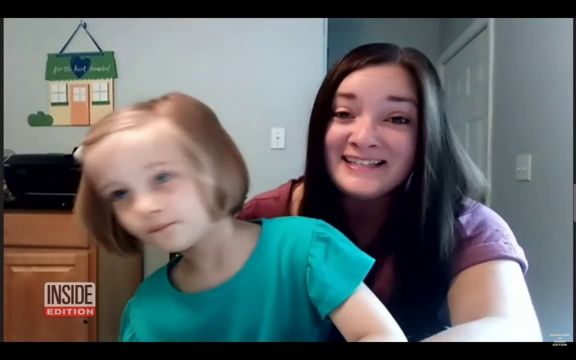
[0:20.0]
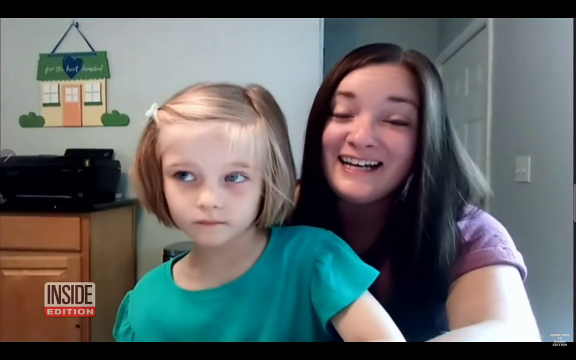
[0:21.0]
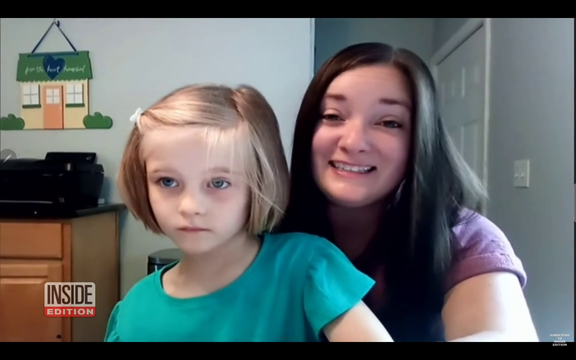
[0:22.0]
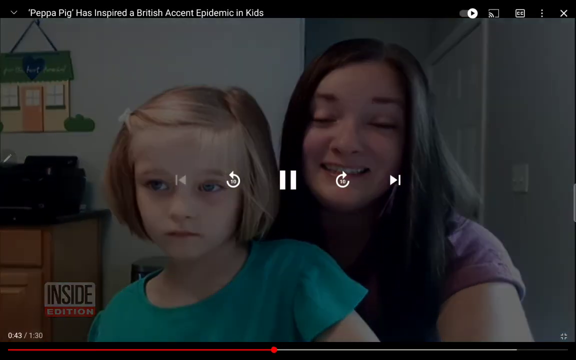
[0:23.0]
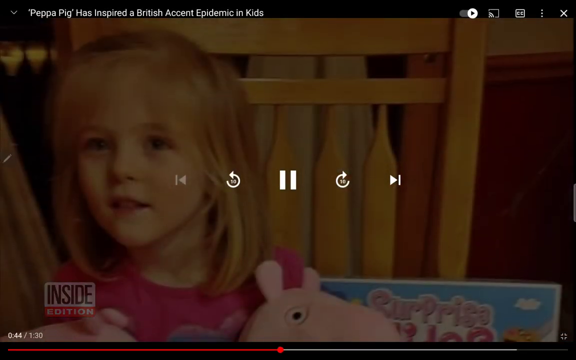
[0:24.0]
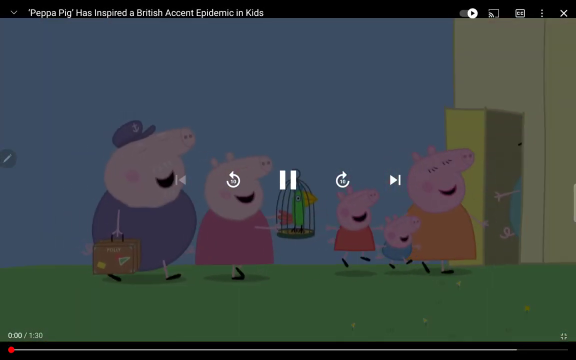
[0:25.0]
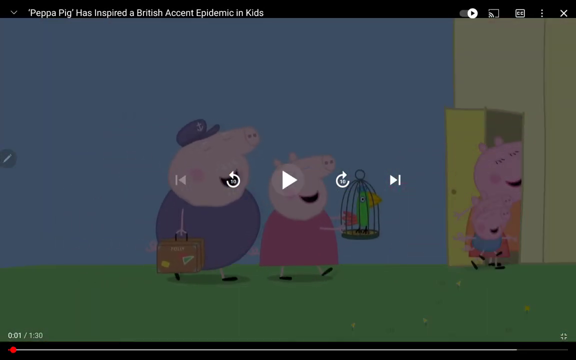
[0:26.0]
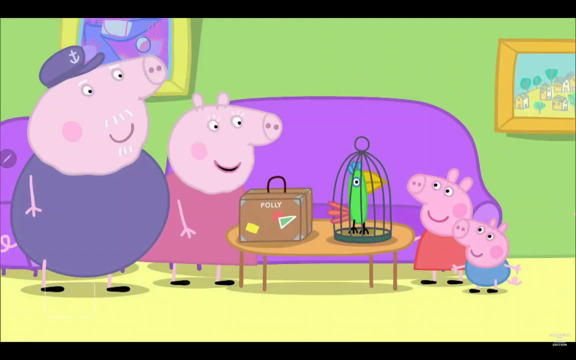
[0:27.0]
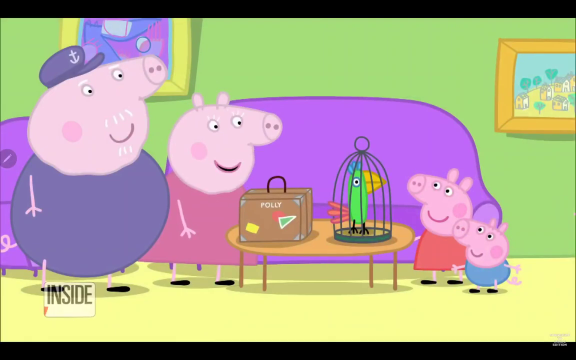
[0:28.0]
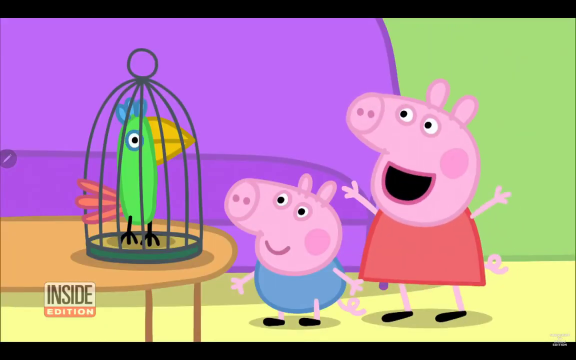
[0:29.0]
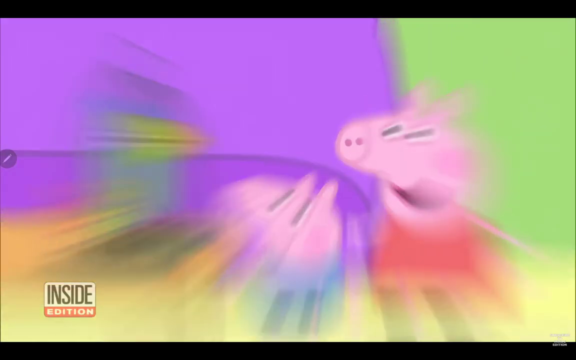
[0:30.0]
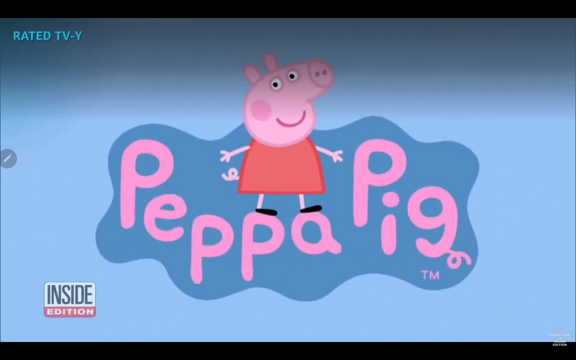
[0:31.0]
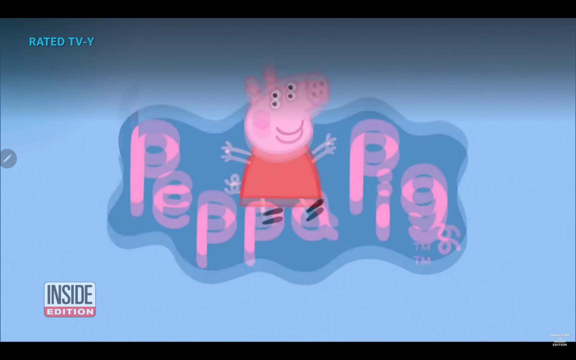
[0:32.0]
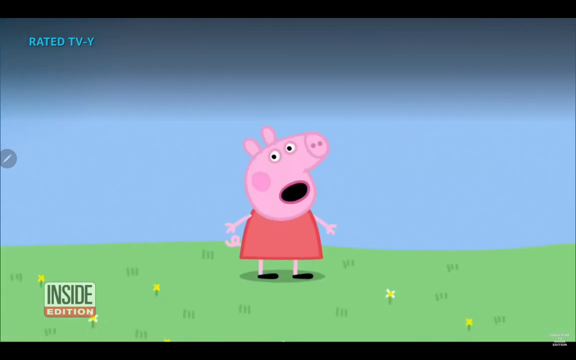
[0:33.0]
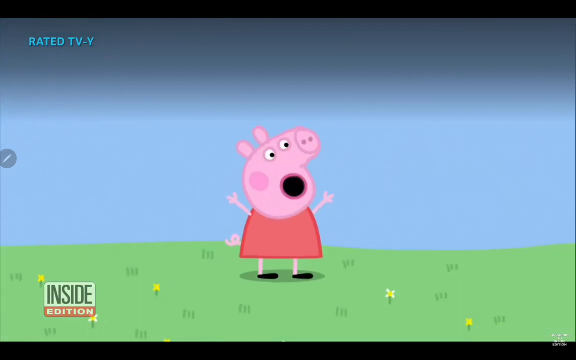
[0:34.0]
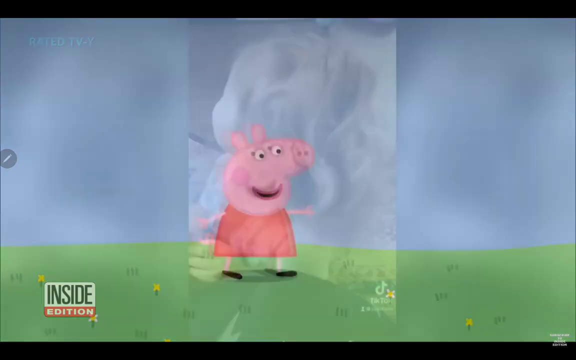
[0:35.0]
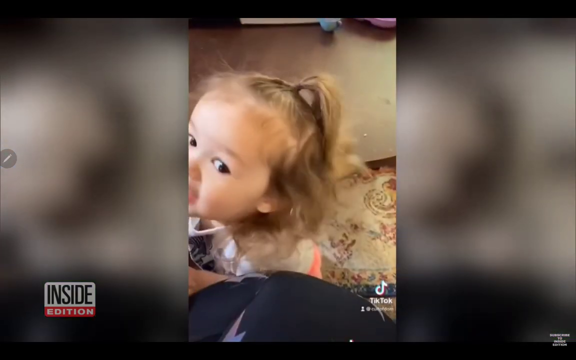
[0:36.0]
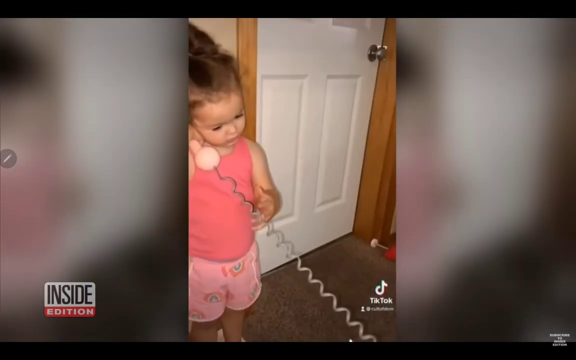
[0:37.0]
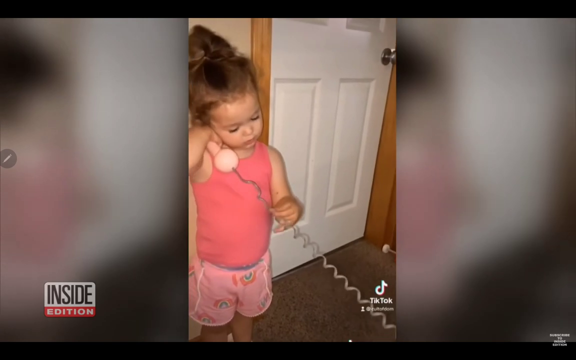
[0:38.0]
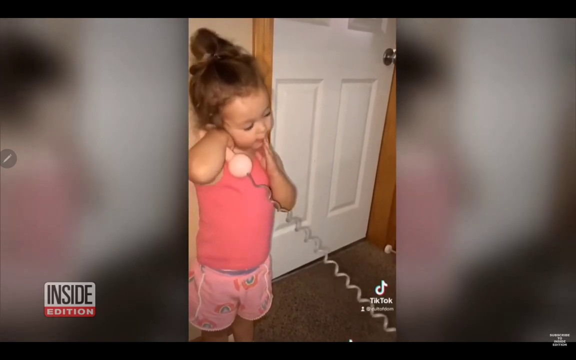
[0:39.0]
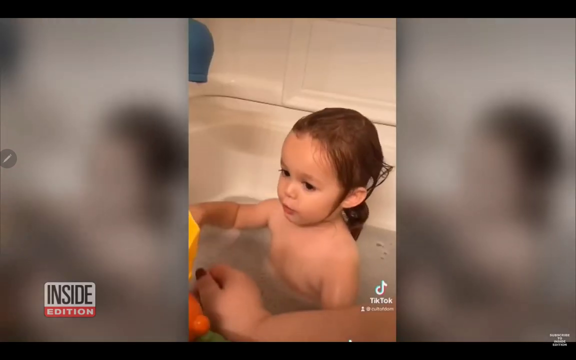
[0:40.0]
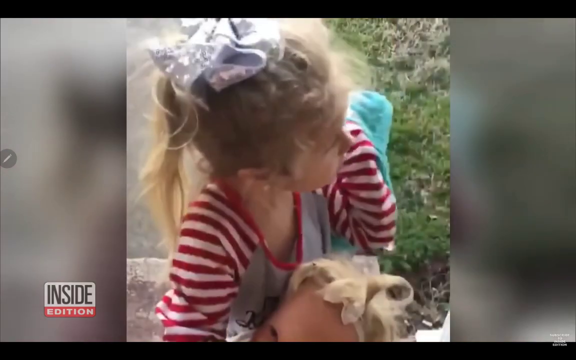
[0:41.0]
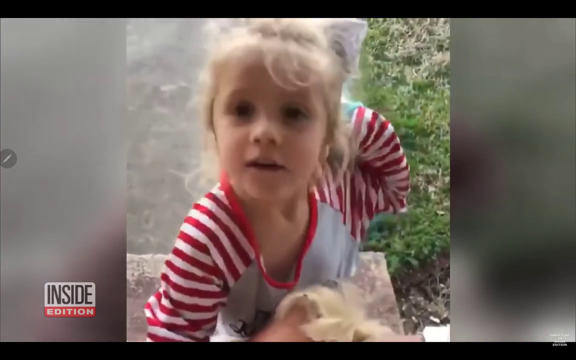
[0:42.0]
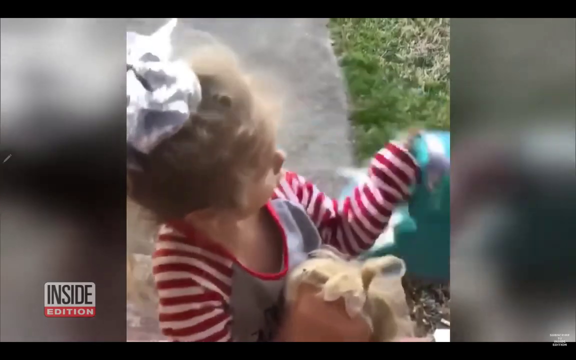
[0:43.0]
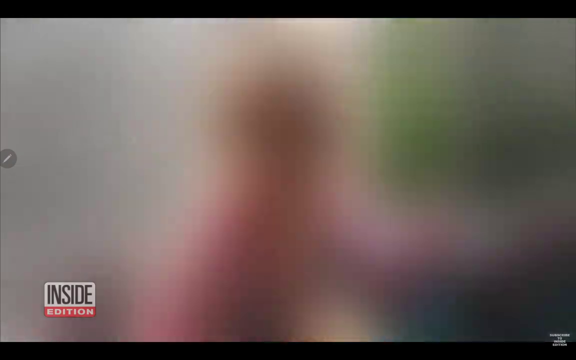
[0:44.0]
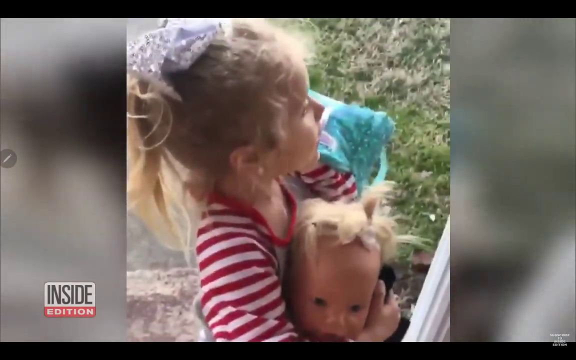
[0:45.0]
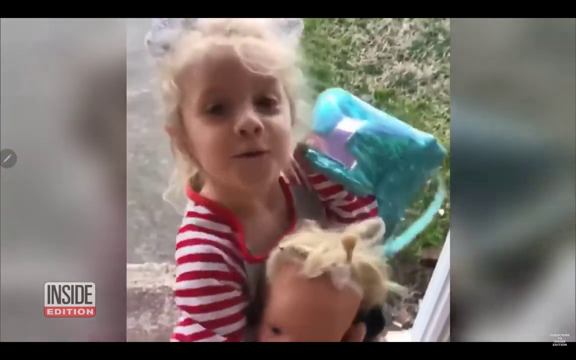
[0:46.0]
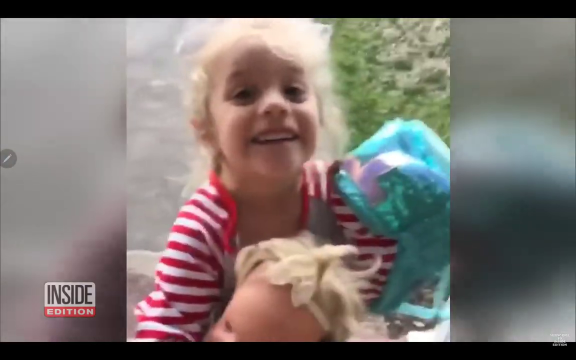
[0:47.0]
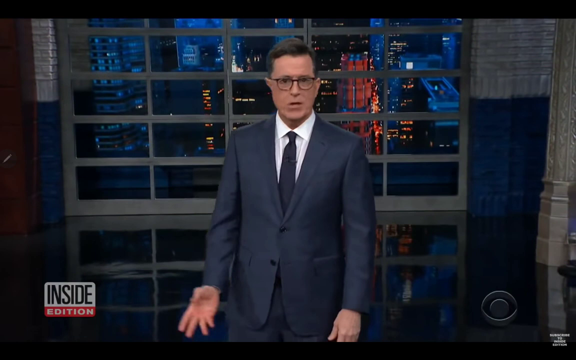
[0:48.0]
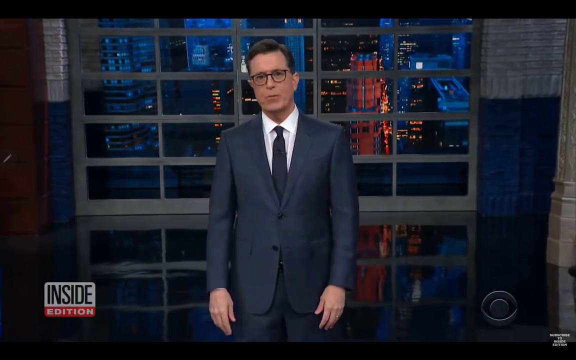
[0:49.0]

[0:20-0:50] A mom holds her daughter in a bedroom. The daughter then appears with her Peppa Pig doll. The video returns to clips of the Peppa Pig show, with the characters in the living room. The Peppa Pig logo is in the top left, and text says "rated TV Y". The logo reads "Peppa Pig" in pink, with a little squiggly tail at the end of the G, and Peppa Pig in her red dress stands on the P and the A in "Peppa". More clips of the show and of kids talking follow, and the sequence ends with a clip of Stephen Colbert.